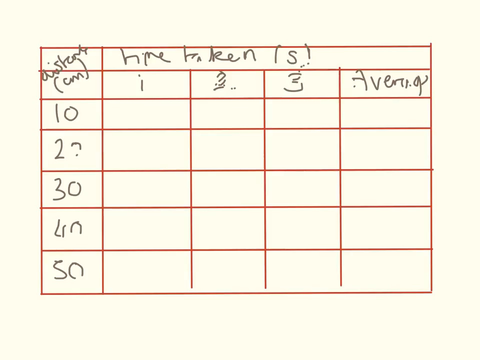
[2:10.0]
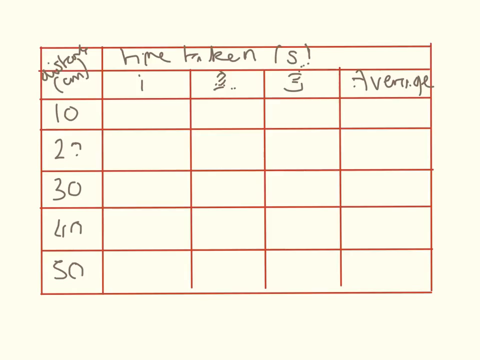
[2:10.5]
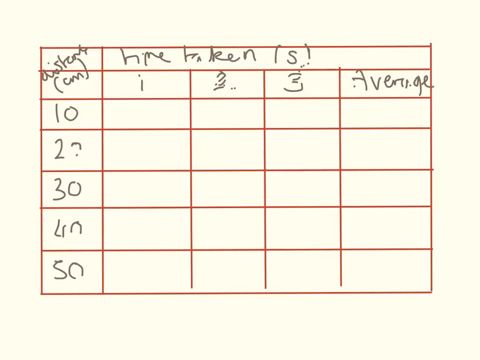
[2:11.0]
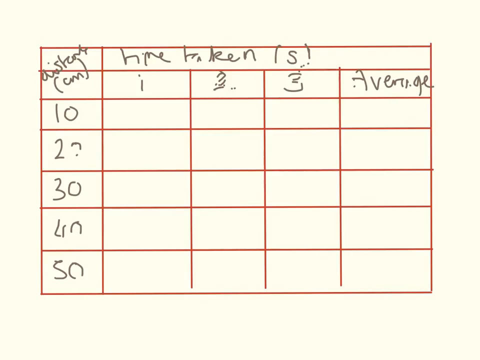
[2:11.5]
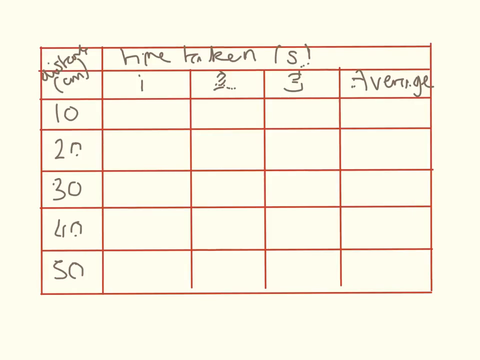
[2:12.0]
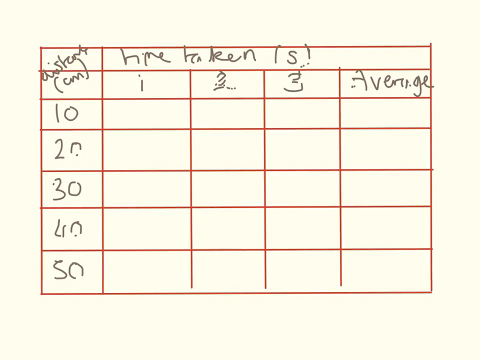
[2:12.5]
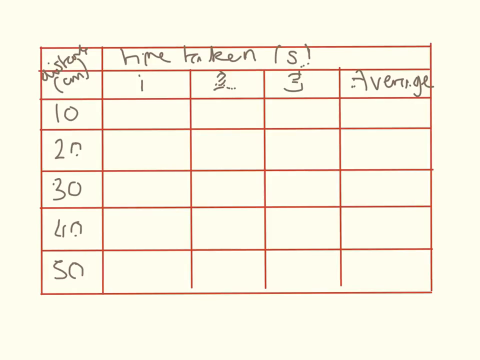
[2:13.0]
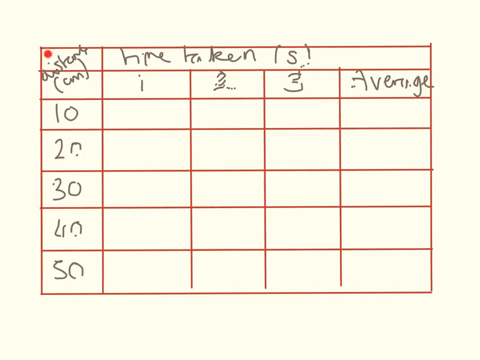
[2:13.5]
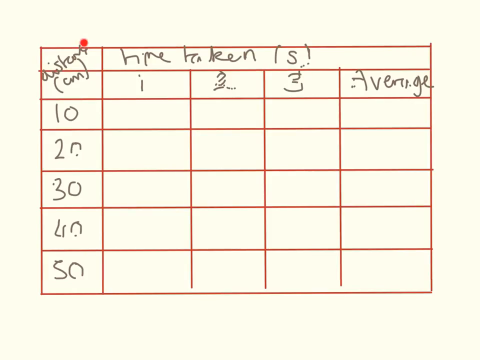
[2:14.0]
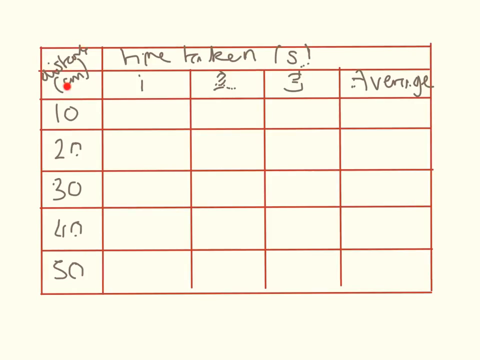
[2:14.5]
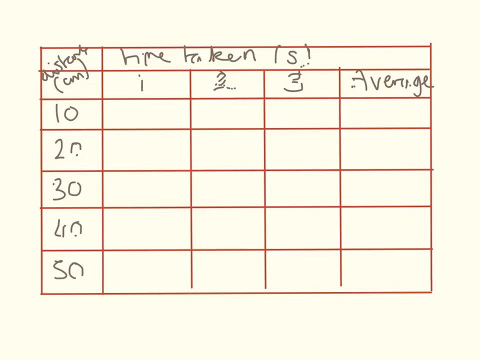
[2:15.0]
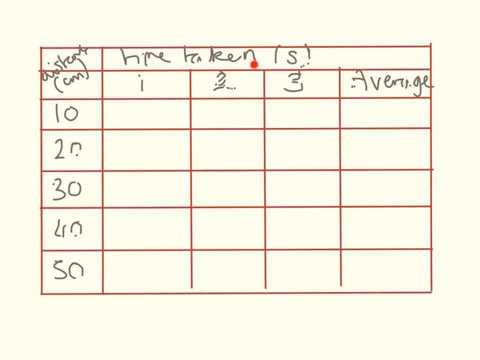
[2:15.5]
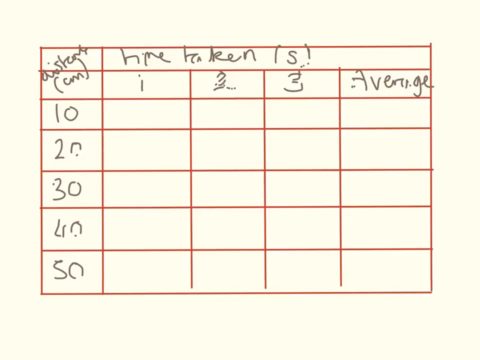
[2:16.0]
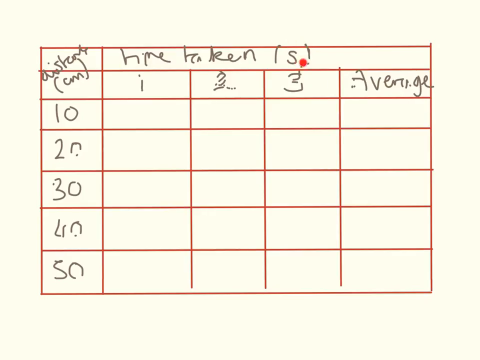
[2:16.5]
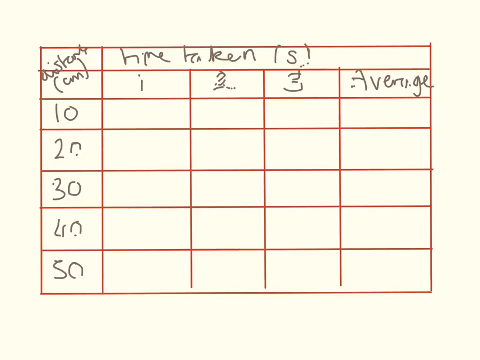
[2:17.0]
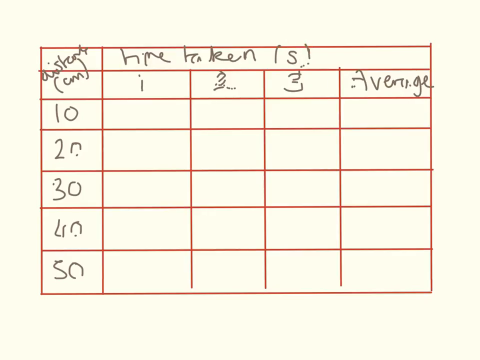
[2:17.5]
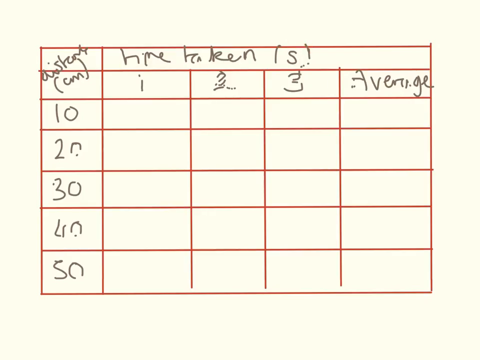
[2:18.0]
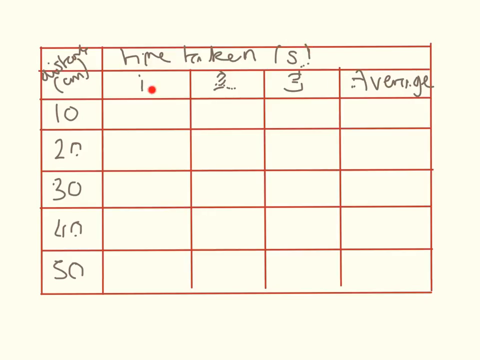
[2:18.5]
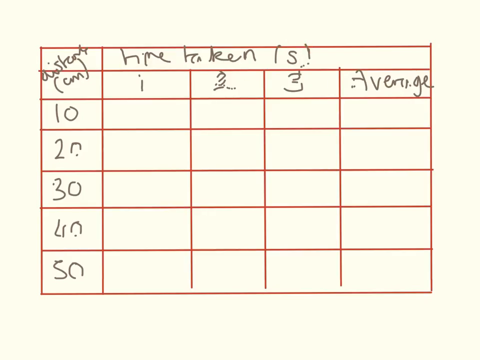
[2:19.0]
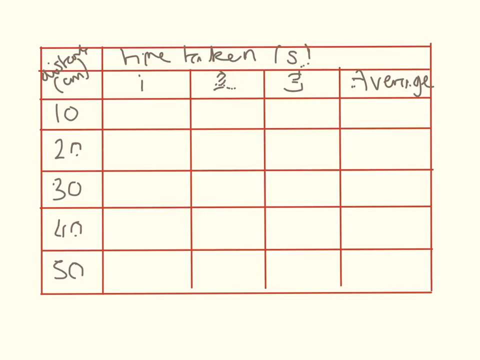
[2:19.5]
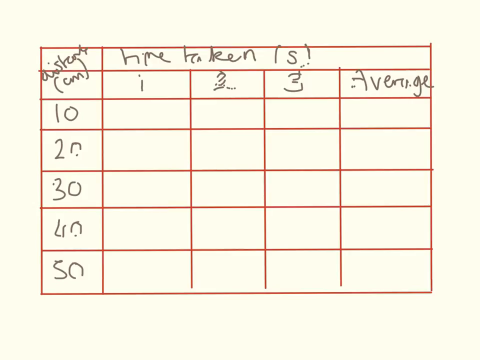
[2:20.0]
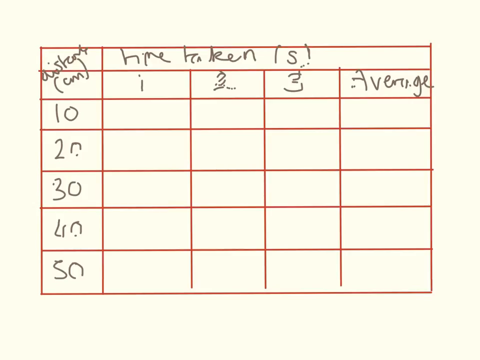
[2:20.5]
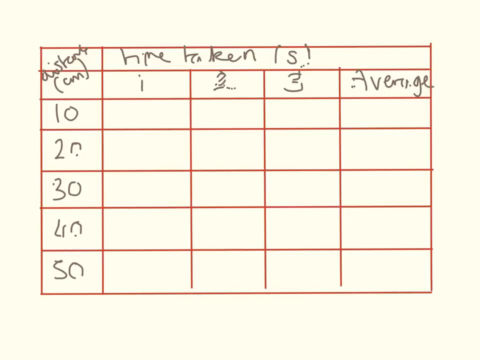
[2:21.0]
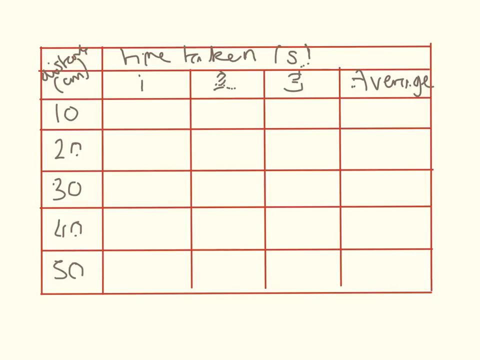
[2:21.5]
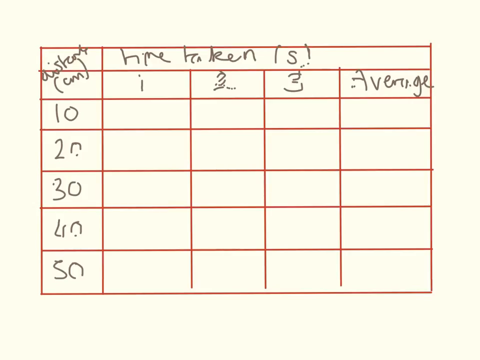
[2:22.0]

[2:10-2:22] On a yellow background there are four vertical lines and six horizontal lines, with a section at the top for a title in gray text that looks like it says "taken is." To the left of that, gray cursive text shows the word "centimeter," with the numbers 10, 20, 30, 40 and 50 beneath it, some cut off with gaps as if the drawing did not properly come up on the screen. At the top are the numbers one, two, three, and on the right the word "average," which also looks slightly broken up and slightly sloppy. A red circle moves around the top left corner and the top of the title, clicking around the different cells.